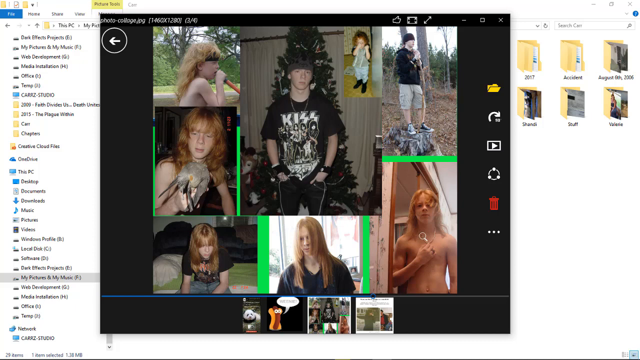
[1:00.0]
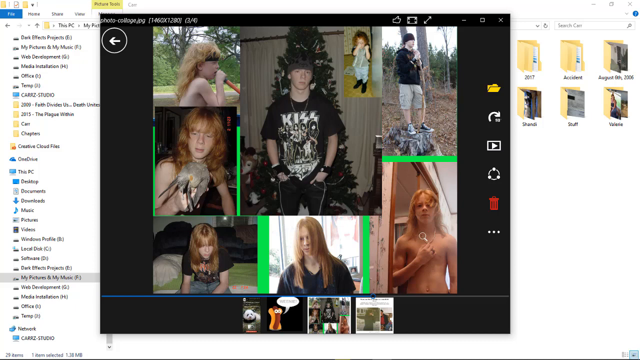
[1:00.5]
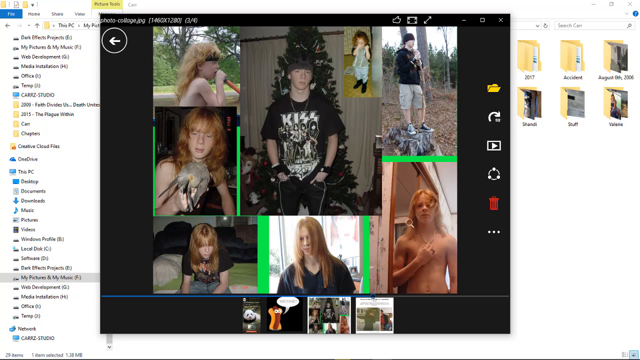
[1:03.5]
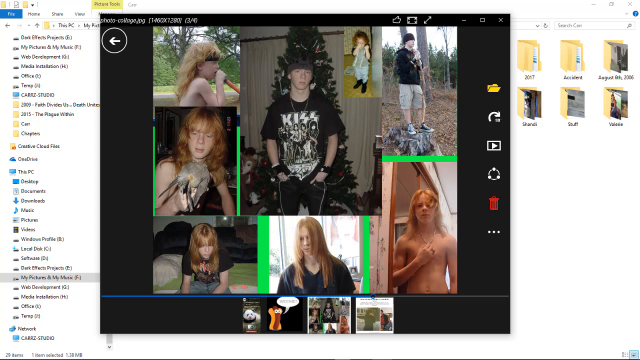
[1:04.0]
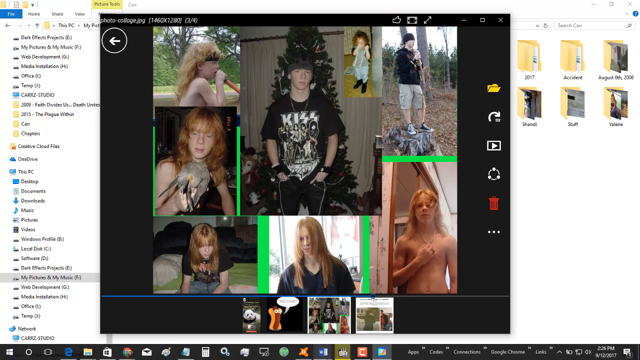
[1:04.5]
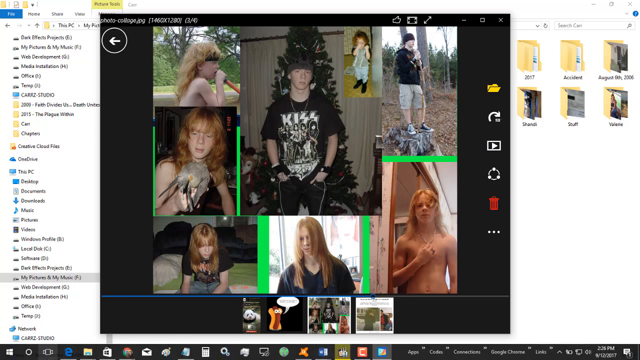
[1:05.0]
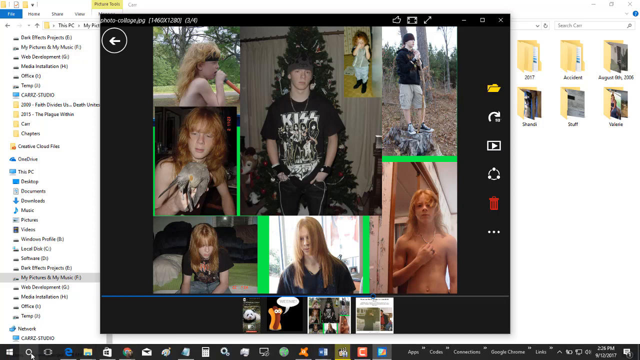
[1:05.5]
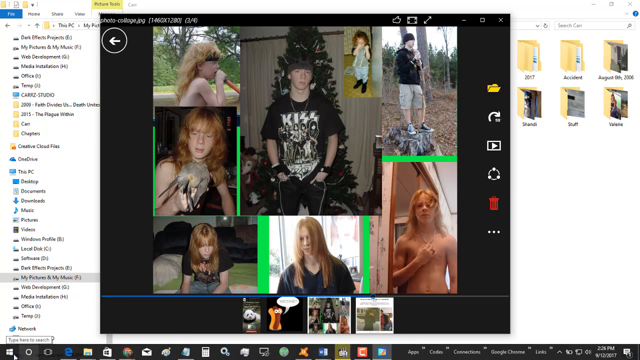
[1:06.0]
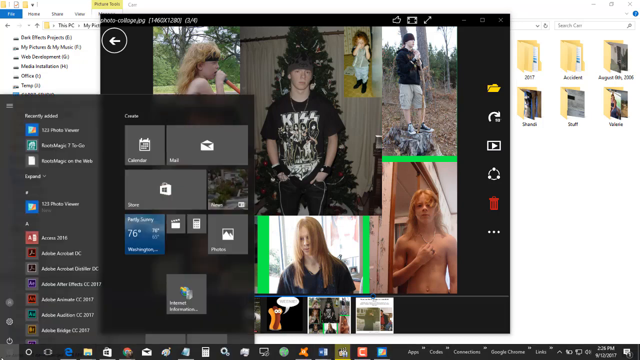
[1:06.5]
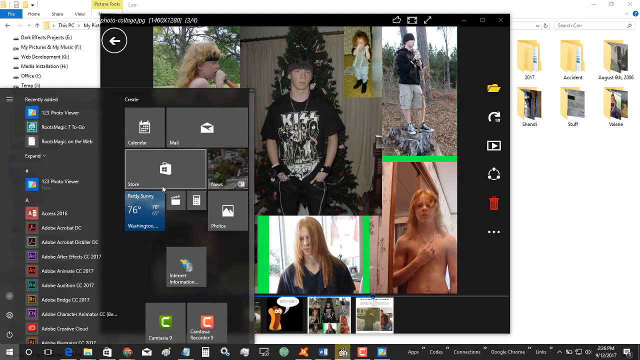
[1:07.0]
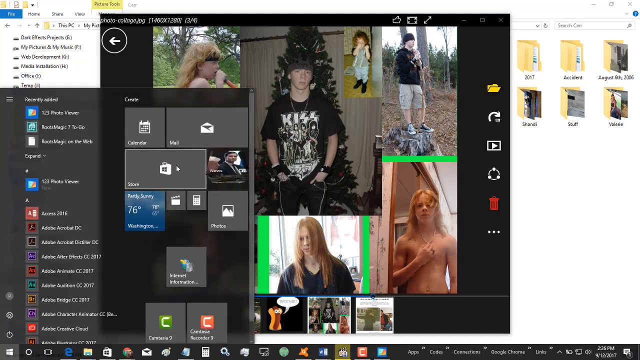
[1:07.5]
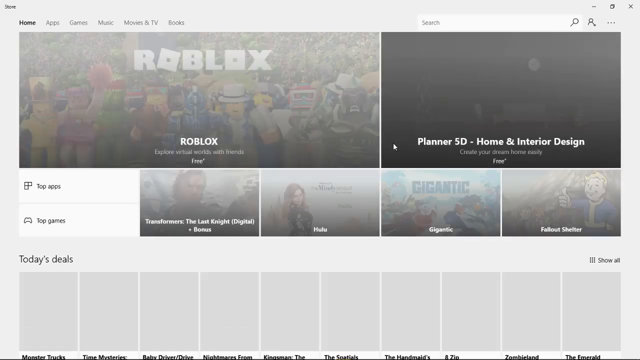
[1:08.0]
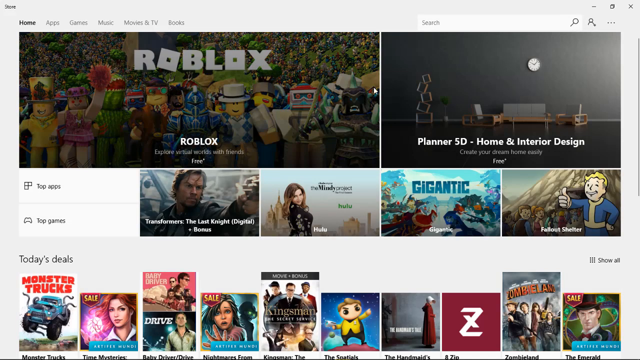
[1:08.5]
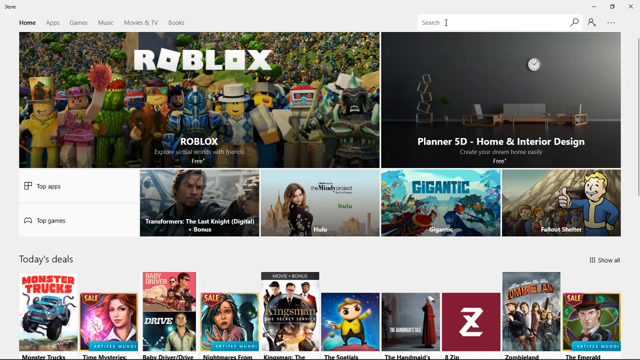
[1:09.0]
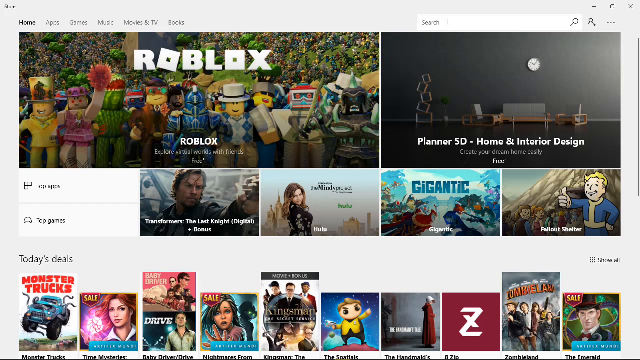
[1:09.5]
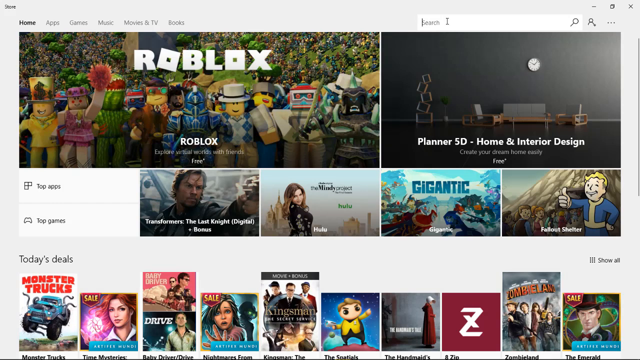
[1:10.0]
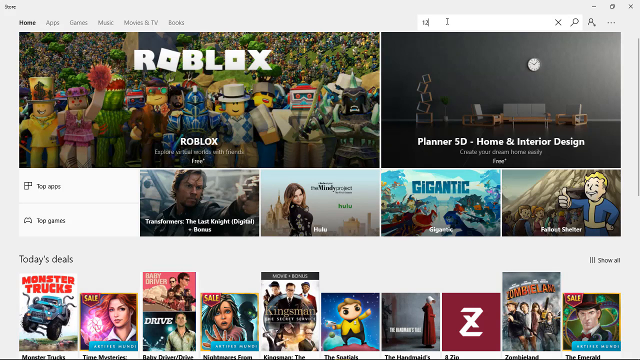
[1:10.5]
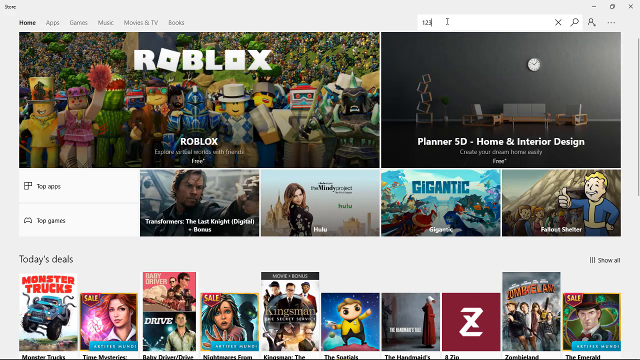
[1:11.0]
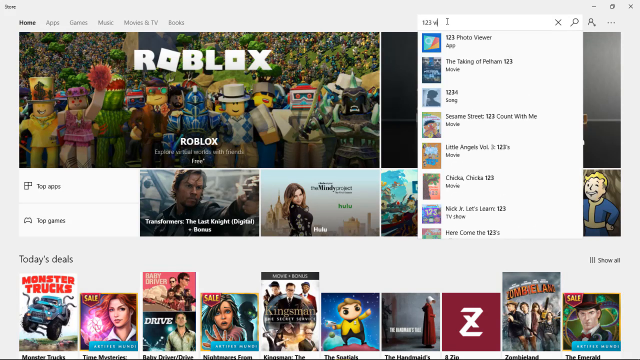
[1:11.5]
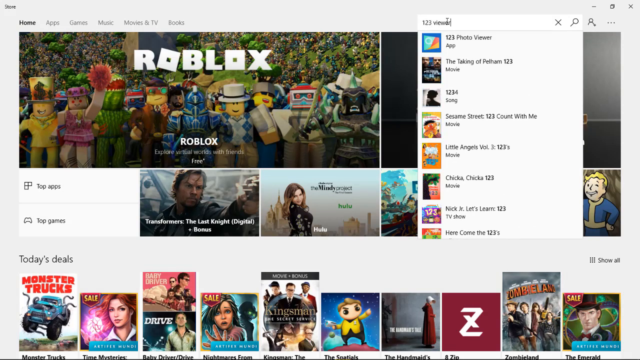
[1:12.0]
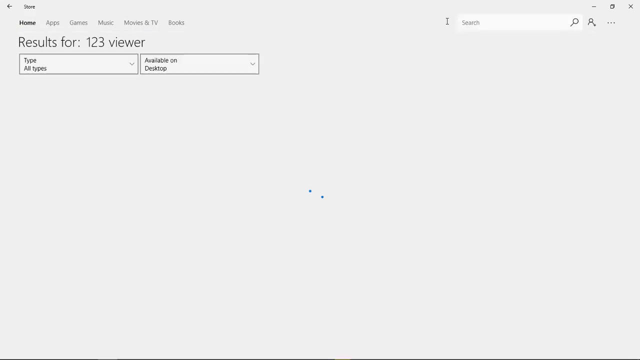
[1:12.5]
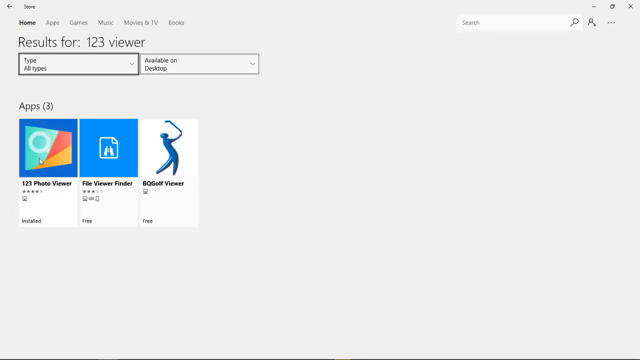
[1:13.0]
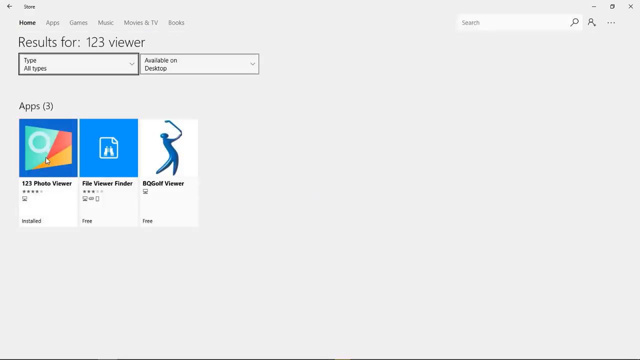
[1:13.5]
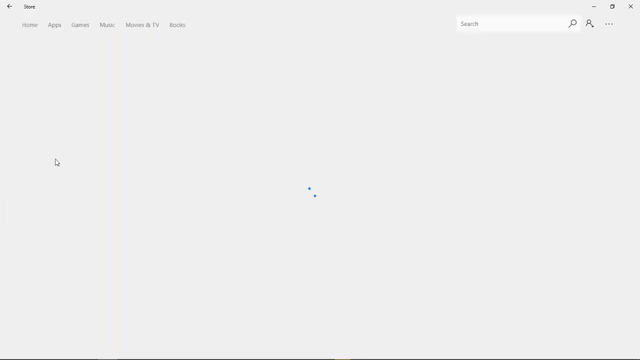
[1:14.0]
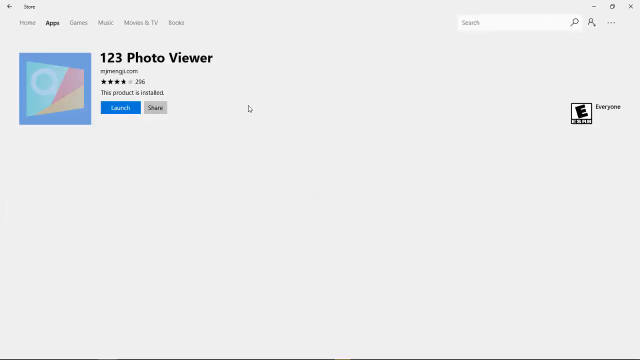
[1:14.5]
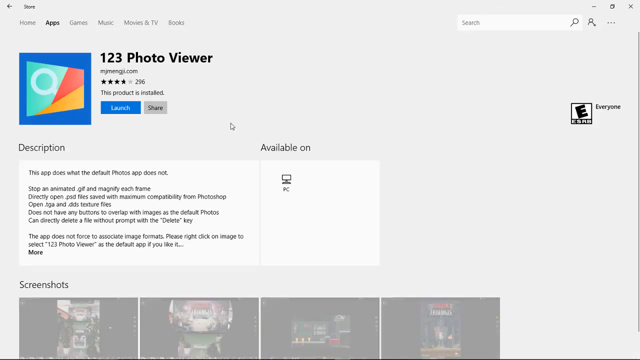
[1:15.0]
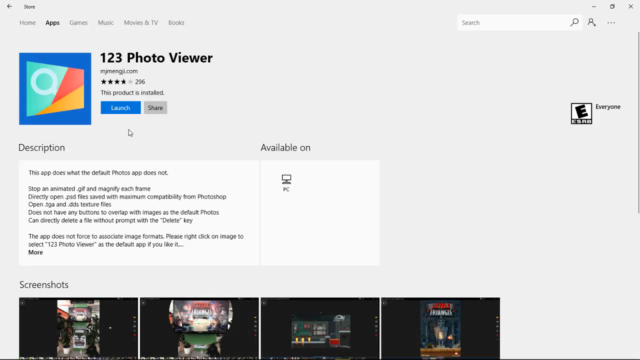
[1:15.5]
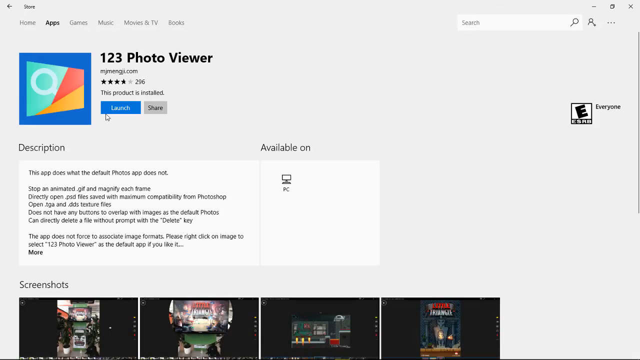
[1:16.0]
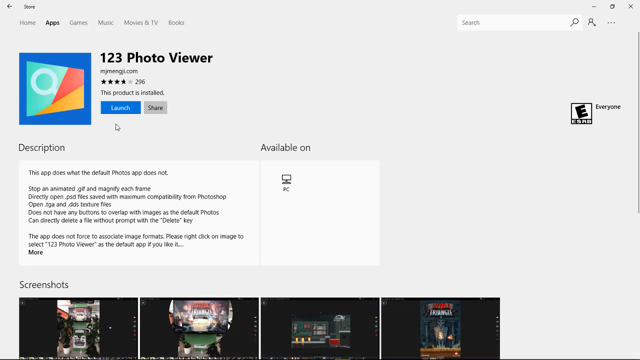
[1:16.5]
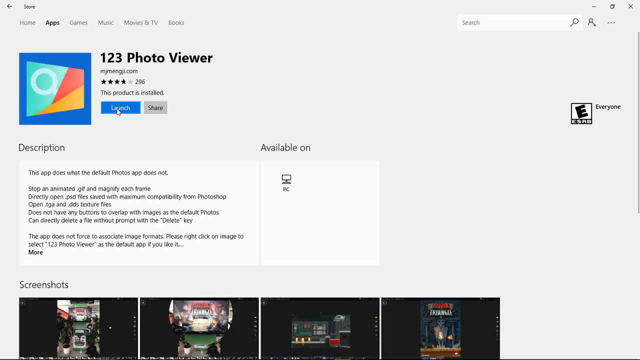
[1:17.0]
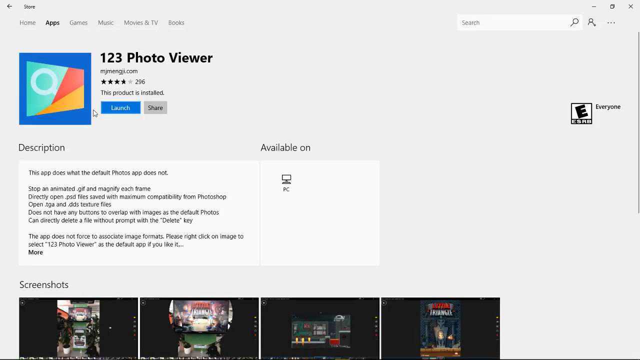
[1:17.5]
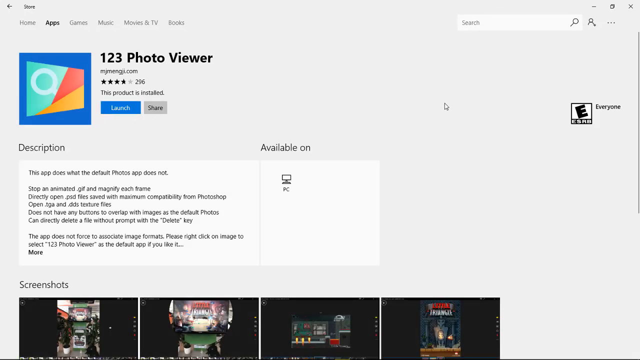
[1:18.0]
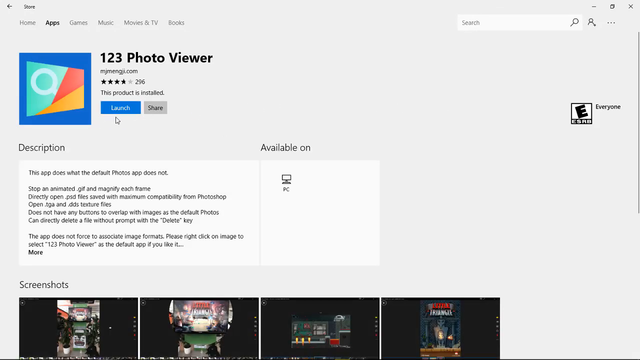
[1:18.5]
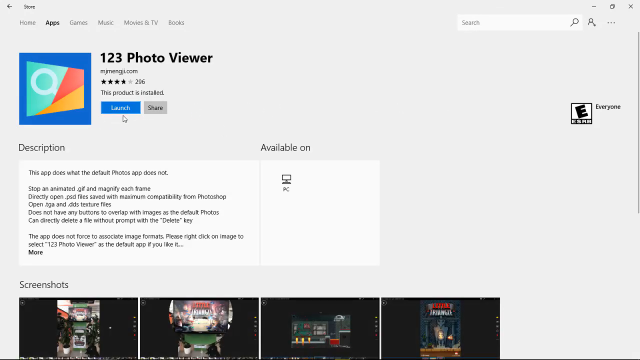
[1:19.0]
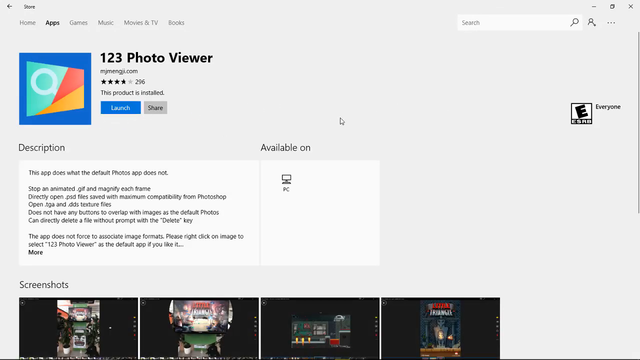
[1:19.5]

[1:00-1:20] A window on a computer screen shows a lot of pictures, seemingly of the same person with long red hair. In the middle picture the person wears a KISS t-shirt with a Christmas tree behind them, and in the lower right the same person has his shirt off with his right hand over his chest. The user seems to click the start menu, which appears in black, and selects an item from it. This navigates to a window that says "Roblox". They click the search button on the search input at the top right and seem to type something in; as they type, apps appear. They select one of the apps, and the app's logo appears on a new page that says "one two three photo viewer". They then seem to scroll down the page.